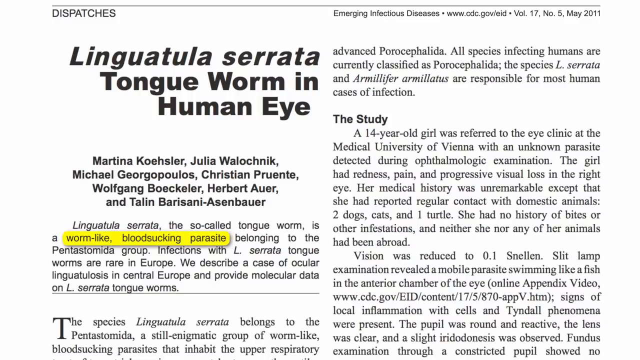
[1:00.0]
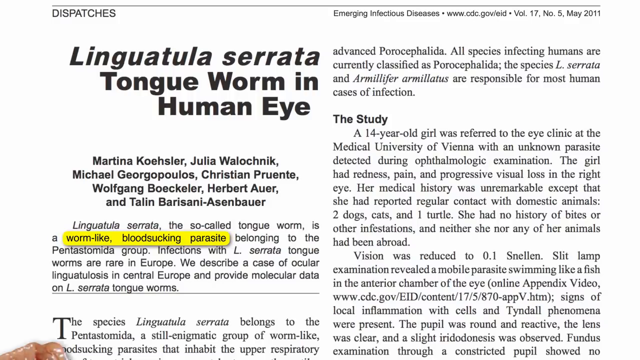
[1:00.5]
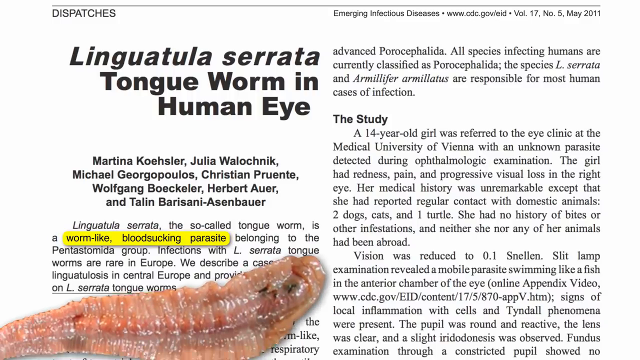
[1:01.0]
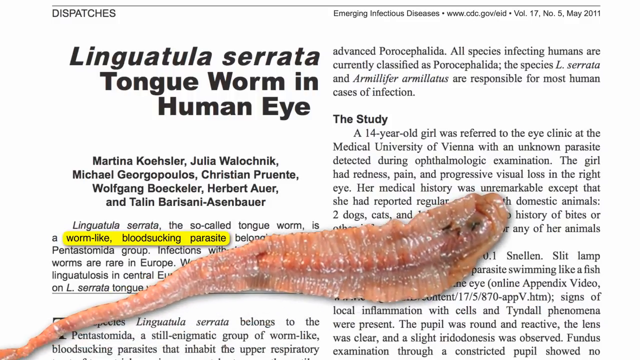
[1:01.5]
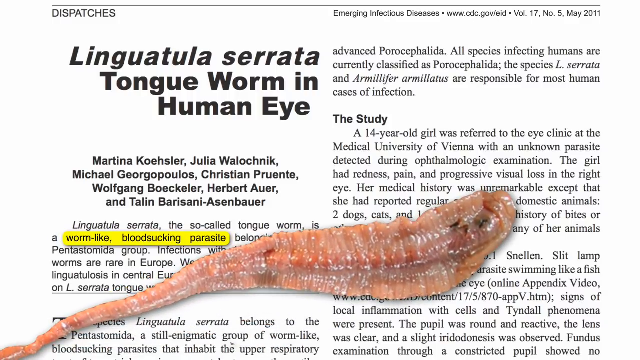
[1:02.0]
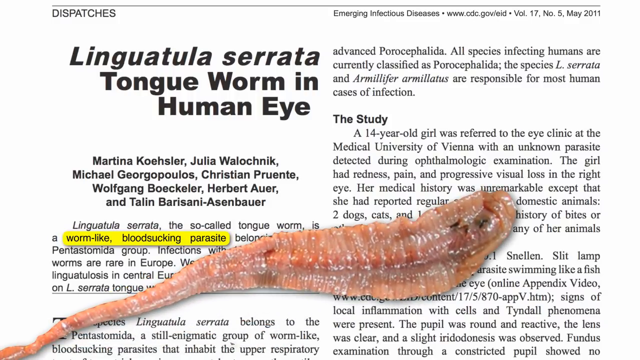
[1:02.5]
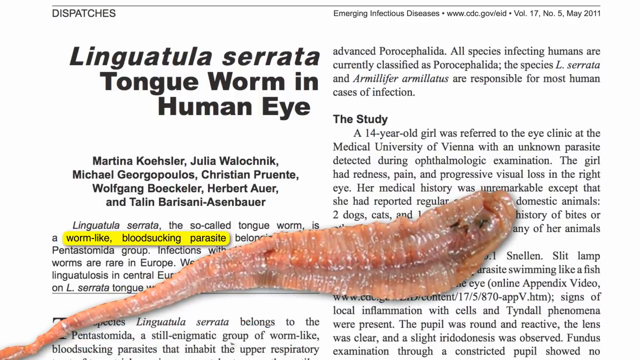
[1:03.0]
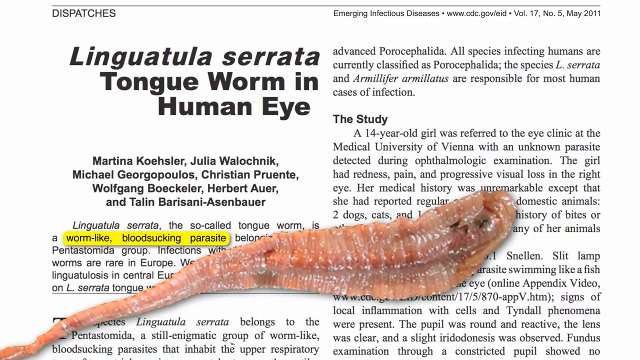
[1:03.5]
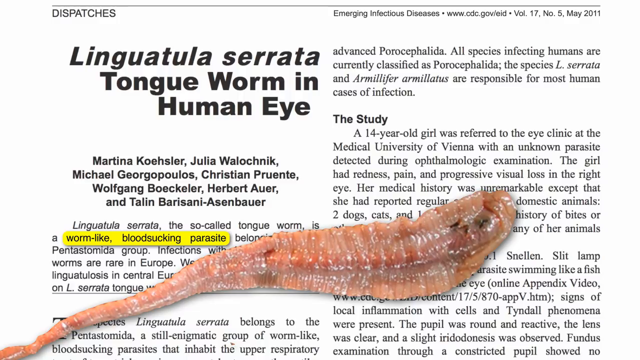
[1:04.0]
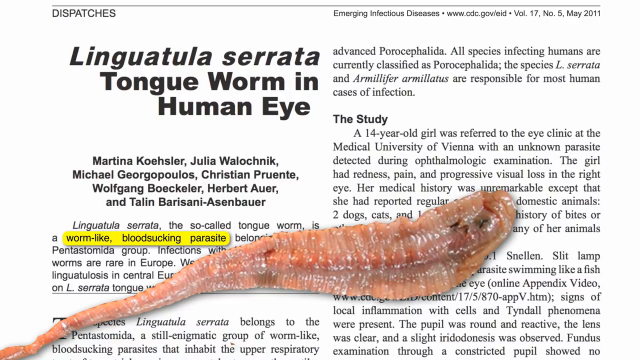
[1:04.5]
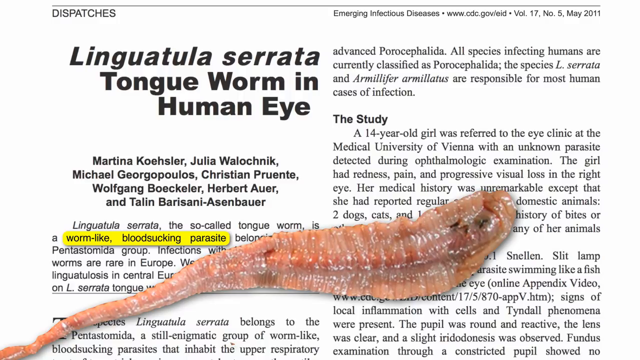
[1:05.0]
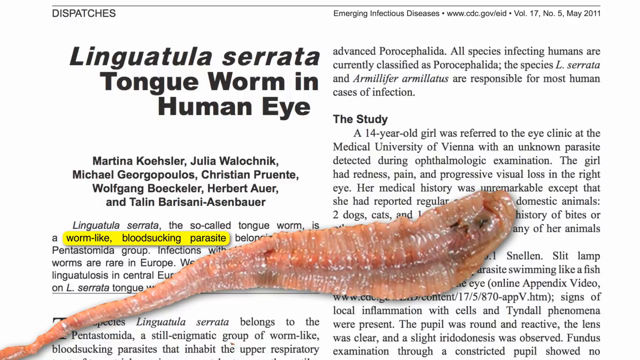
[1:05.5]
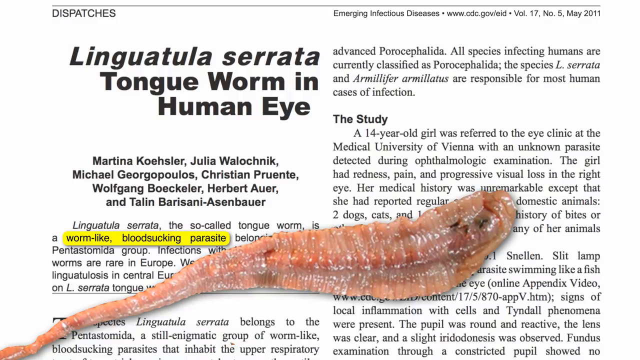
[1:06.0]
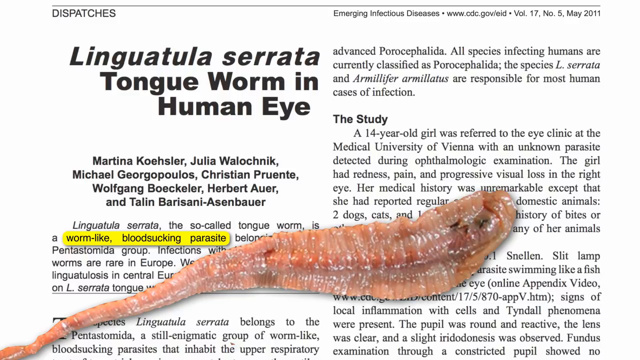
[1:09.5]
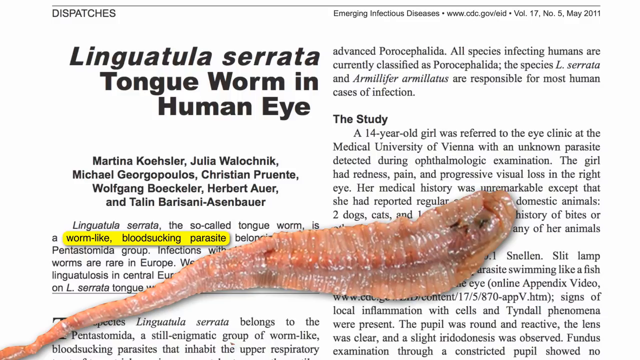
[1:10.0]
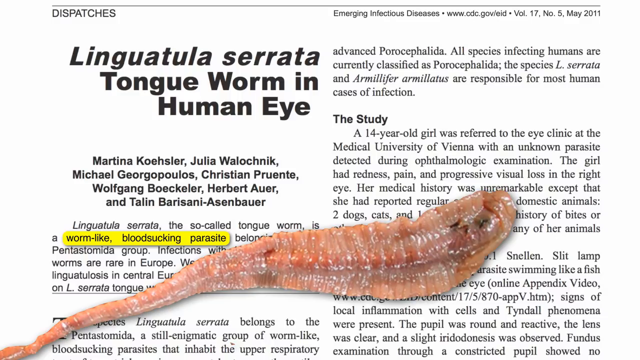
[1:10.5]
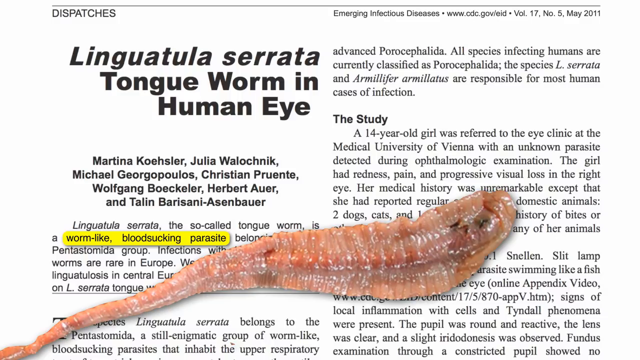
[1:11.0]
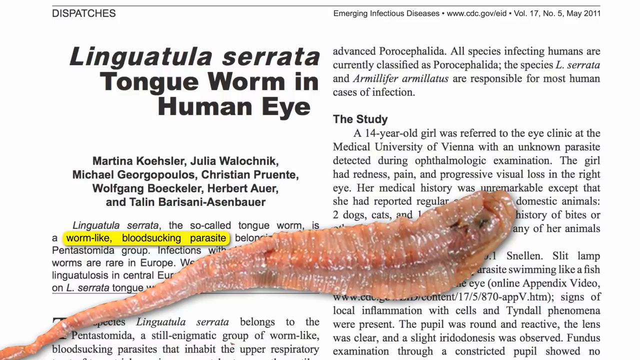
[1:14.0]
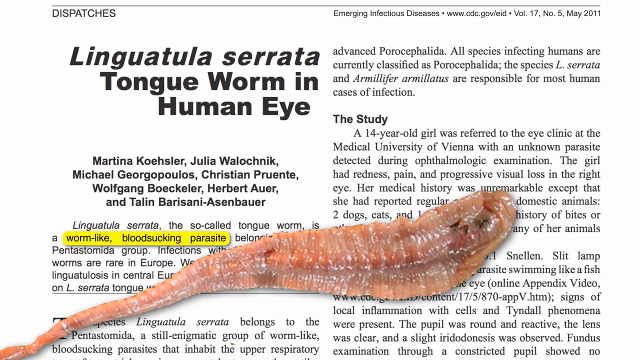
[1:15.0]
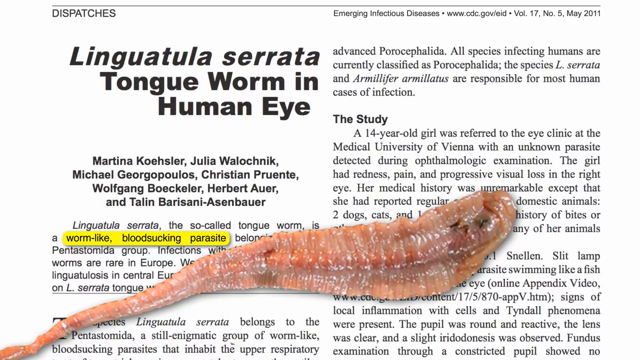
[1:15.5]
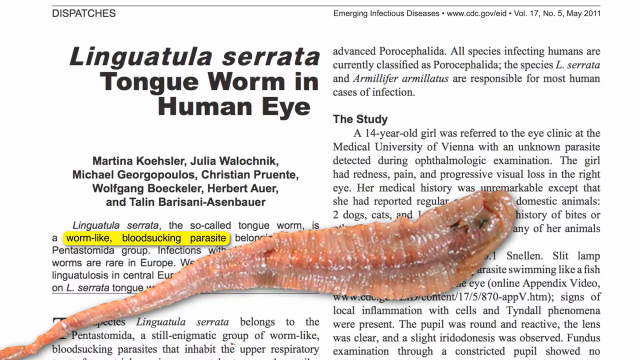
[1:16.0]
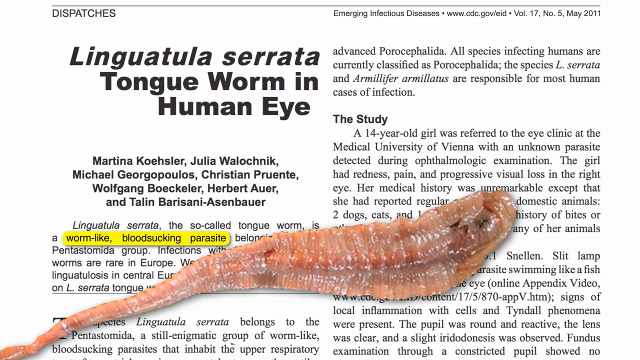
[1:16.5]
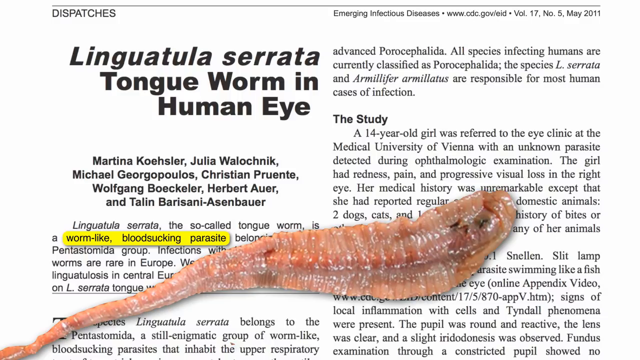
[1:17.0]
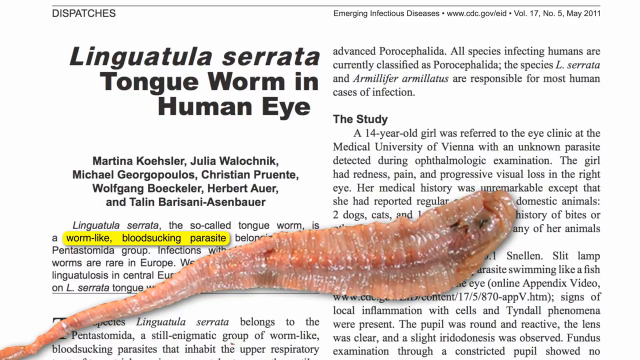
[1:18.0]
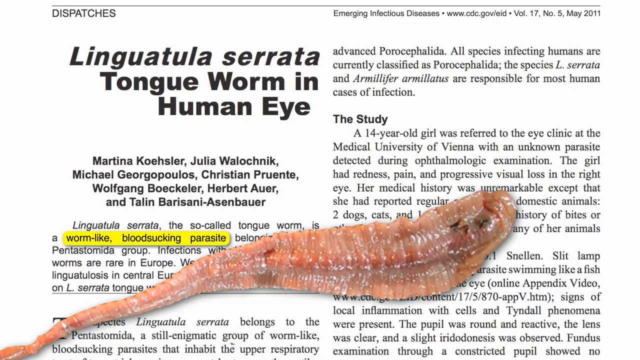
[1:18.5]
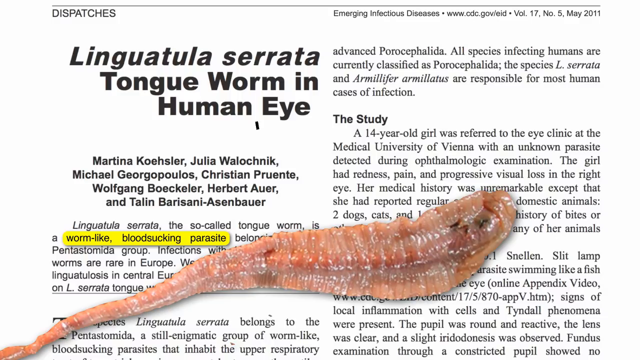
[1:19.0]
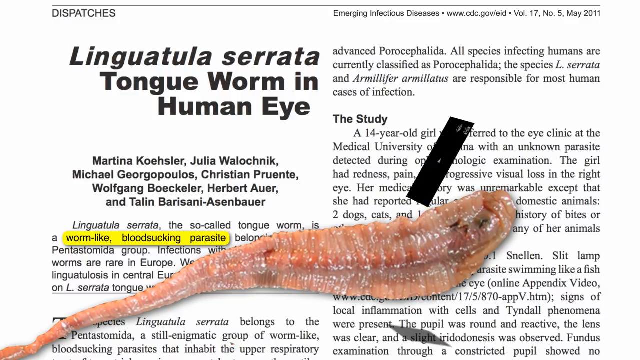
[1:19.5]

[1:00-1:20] An article reads: "A 14-year-old girl was referred to the eye clinic at the Medical University of Vienna with an unknown parasite detected during ophthalmologic examination. The girl had redness, pain, and progressive visual loss in the right eye. Her medical history was unremarkable except that she had reported regular contact with domestic animals, two dogs, cats, and one turtle. She had no history of bites or other infestations, and neither she nor any of her animals had been abroad. Vision was reduced to 0.1" and "a slit-lamp examination revealed a mobile parasite swimming like a fish in the anterior chamber of the eye." Then a pinkish photo of the parasite appears on the screen. The words "worm-like bloodsucking parasite" are highlighted in yellow in the article, and the image of the worm or parasite stays on top of the article before another screen begins.